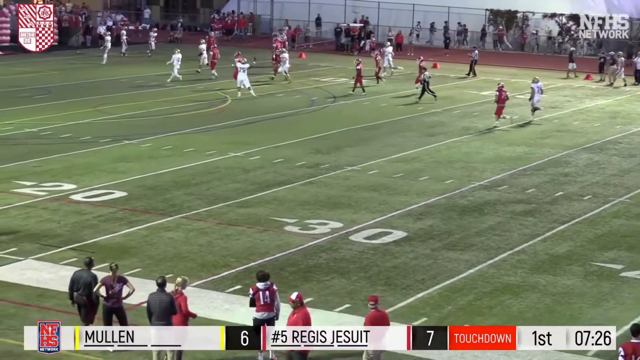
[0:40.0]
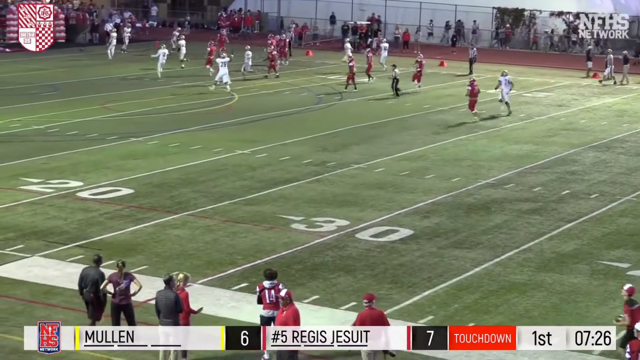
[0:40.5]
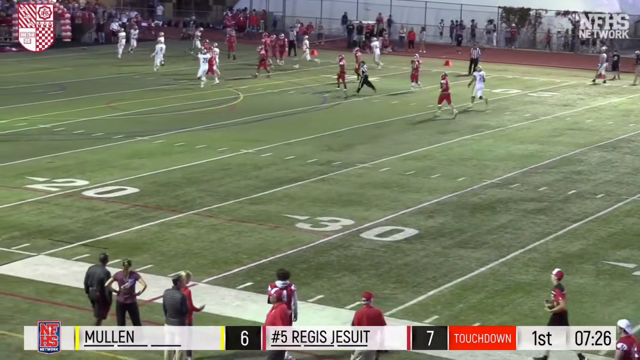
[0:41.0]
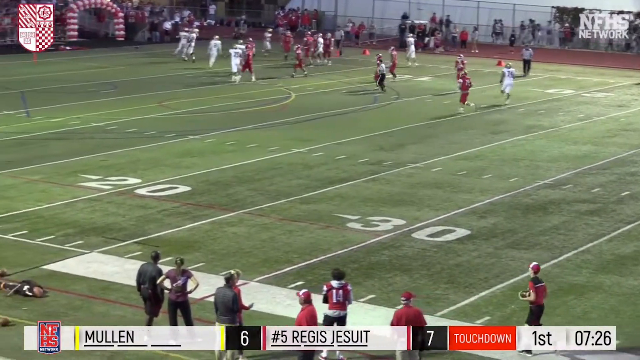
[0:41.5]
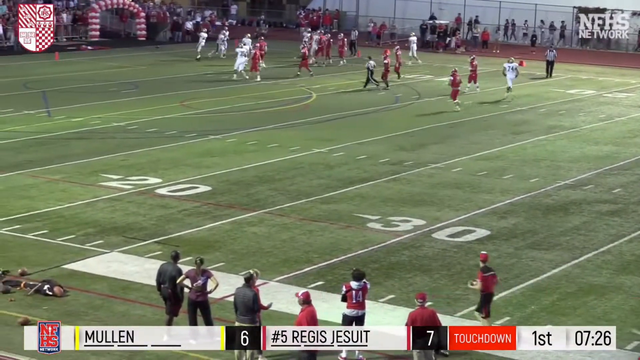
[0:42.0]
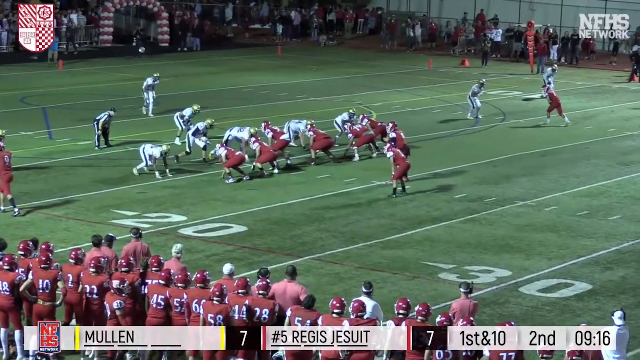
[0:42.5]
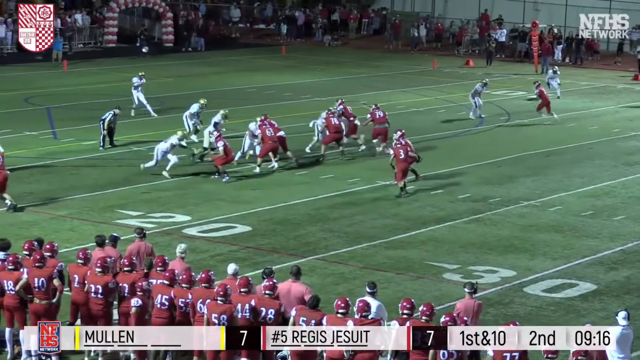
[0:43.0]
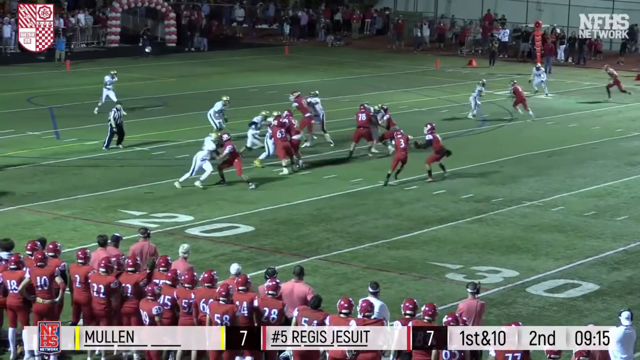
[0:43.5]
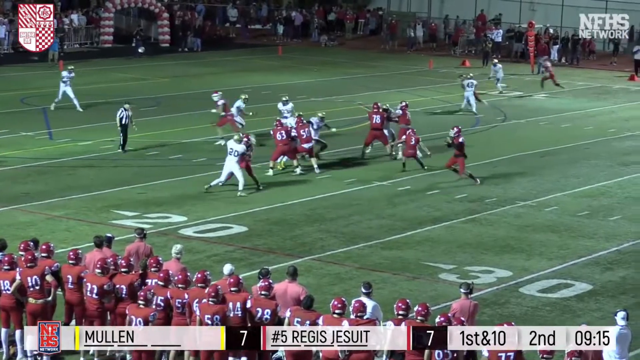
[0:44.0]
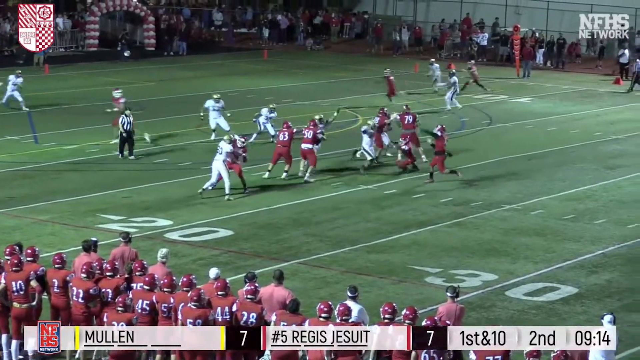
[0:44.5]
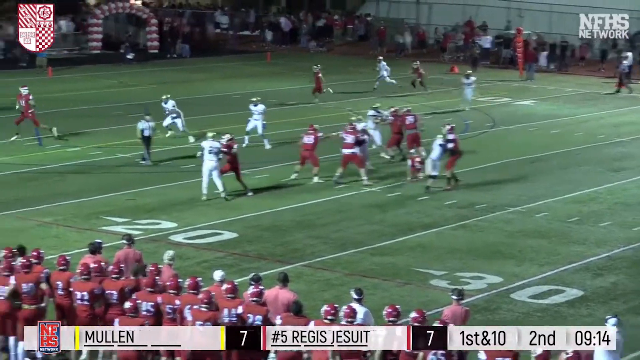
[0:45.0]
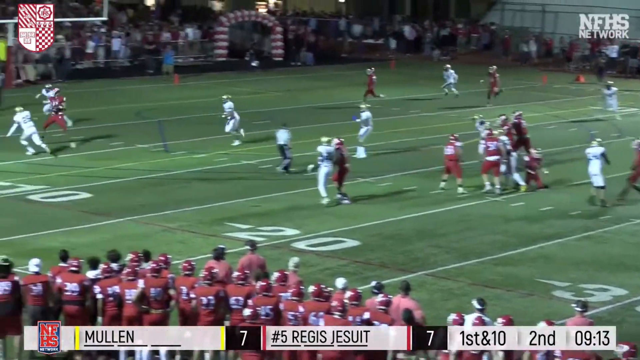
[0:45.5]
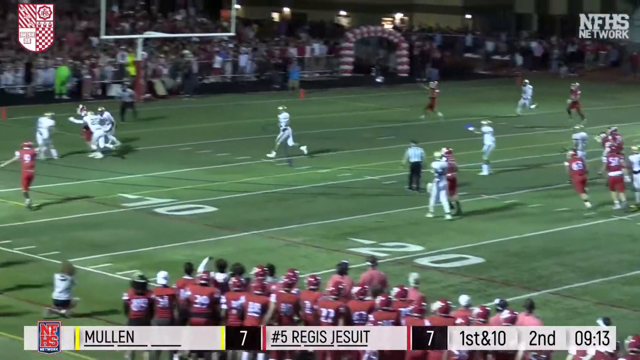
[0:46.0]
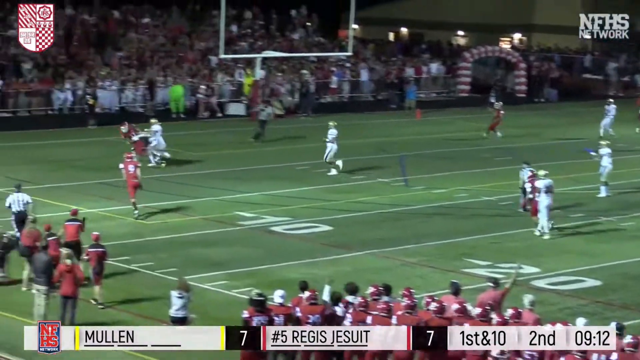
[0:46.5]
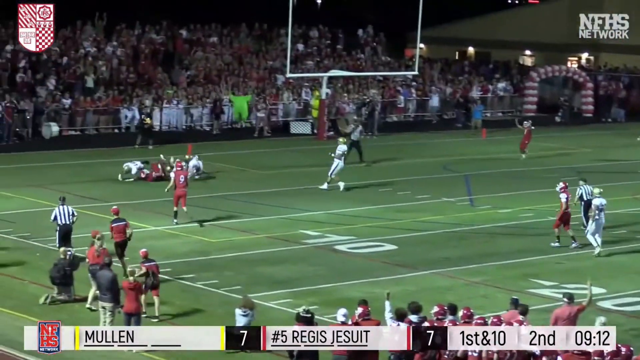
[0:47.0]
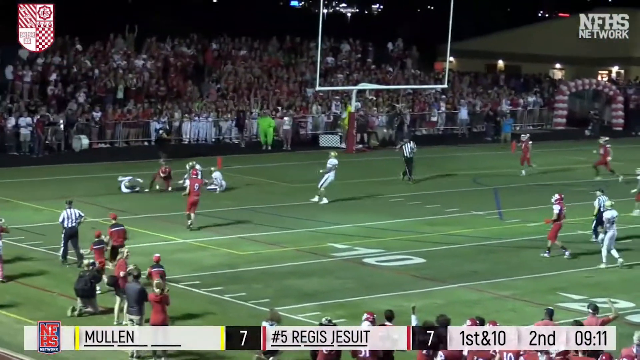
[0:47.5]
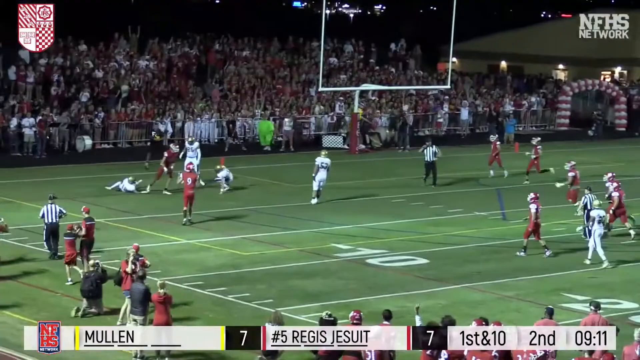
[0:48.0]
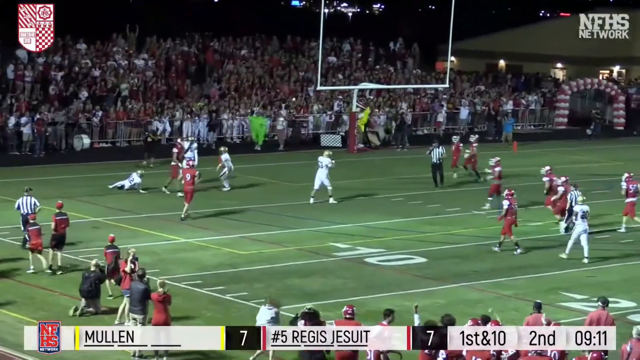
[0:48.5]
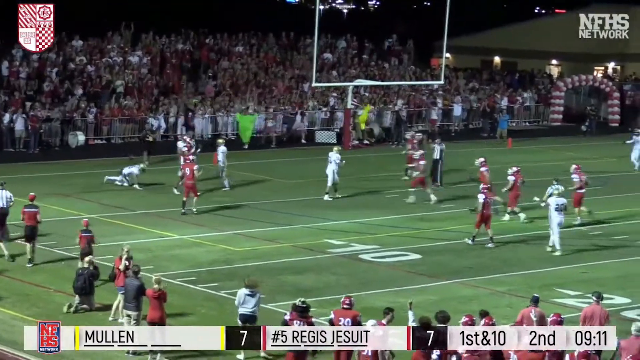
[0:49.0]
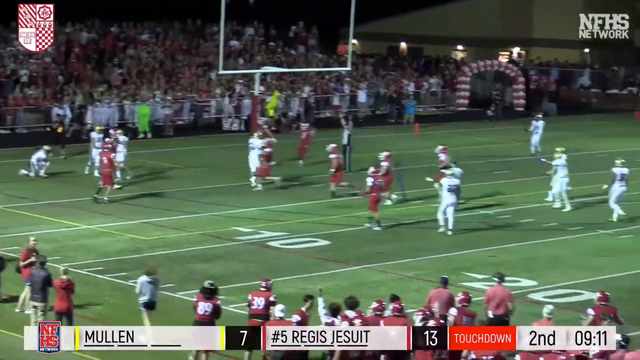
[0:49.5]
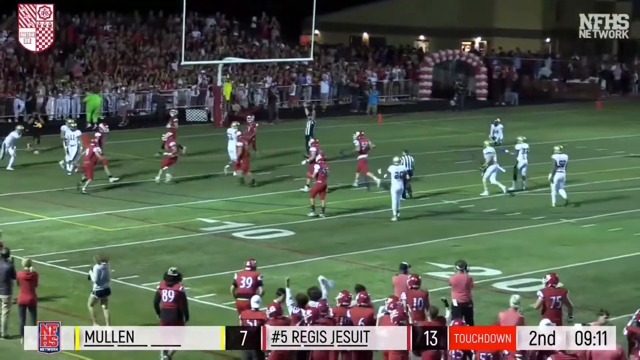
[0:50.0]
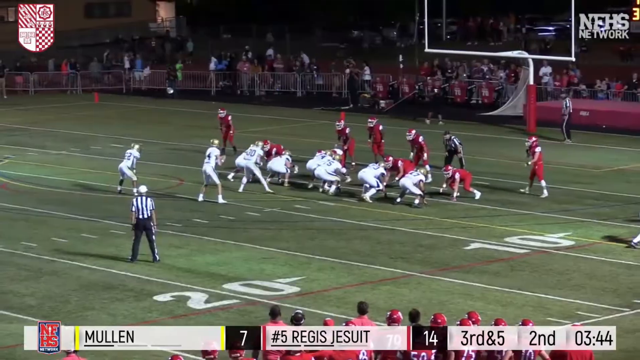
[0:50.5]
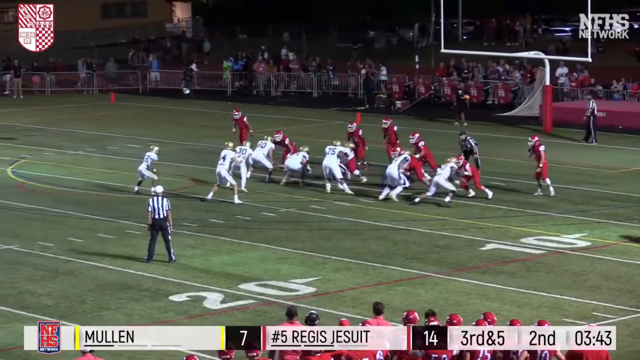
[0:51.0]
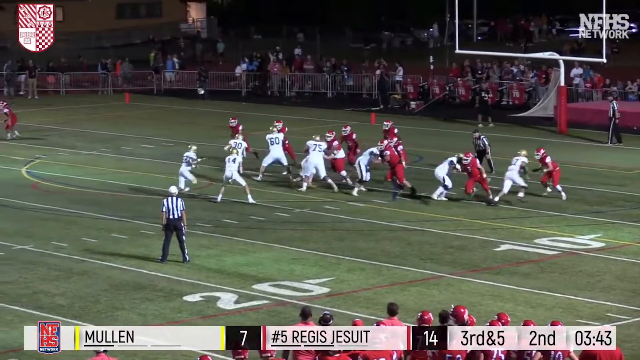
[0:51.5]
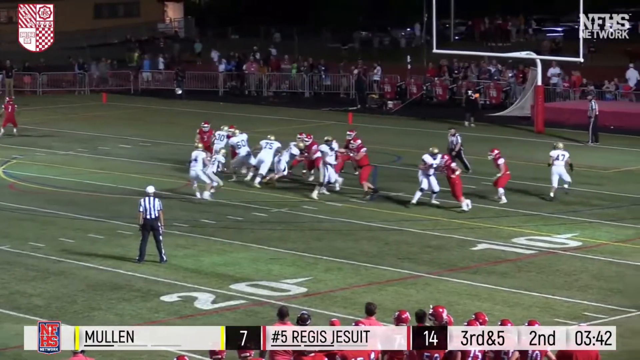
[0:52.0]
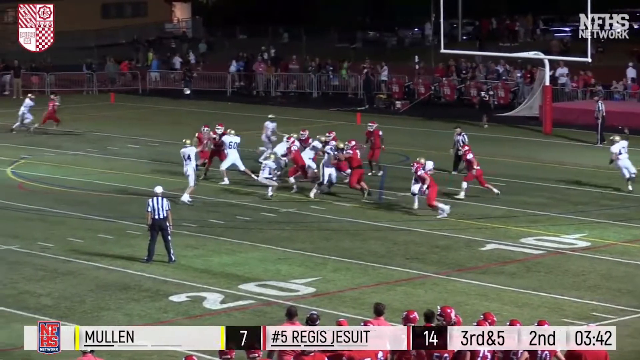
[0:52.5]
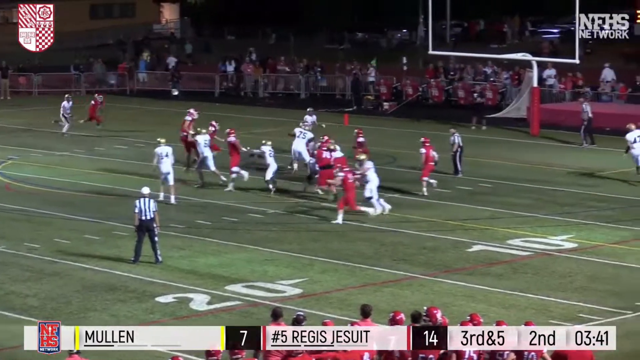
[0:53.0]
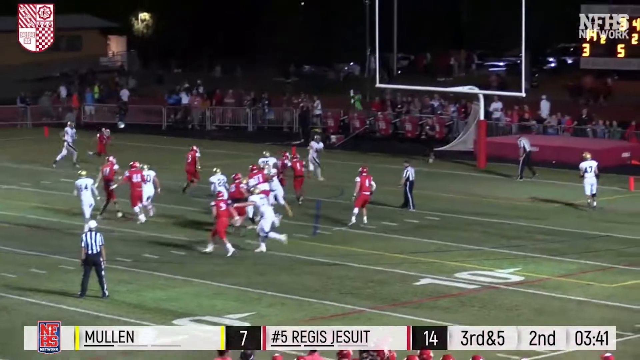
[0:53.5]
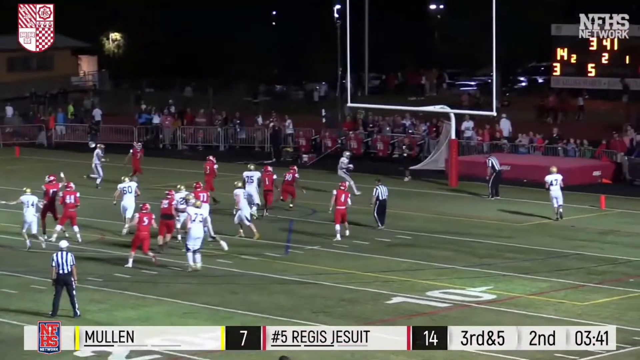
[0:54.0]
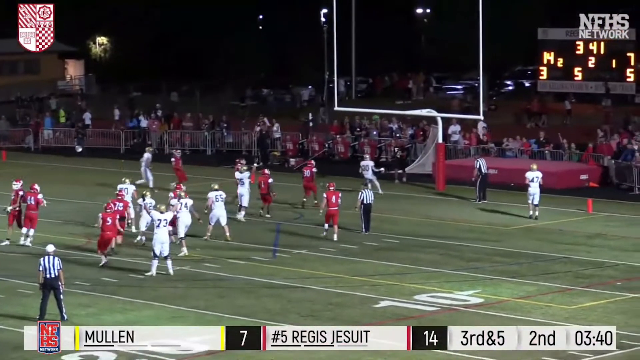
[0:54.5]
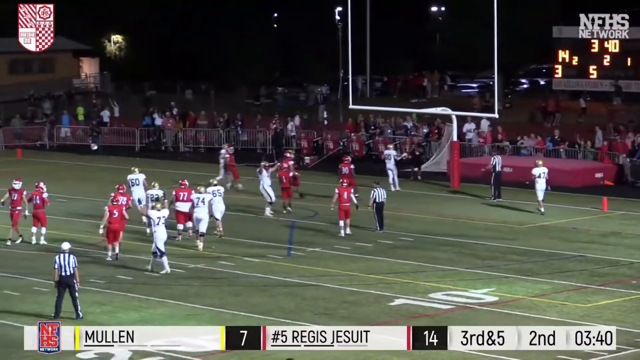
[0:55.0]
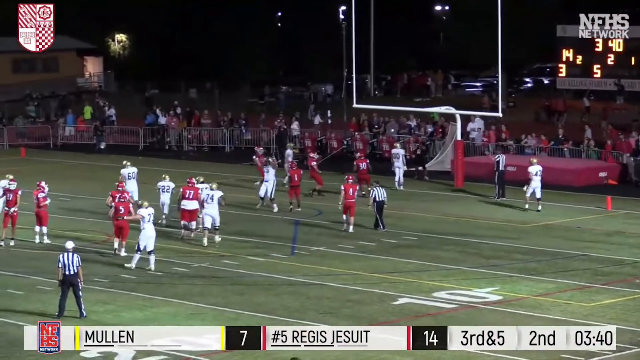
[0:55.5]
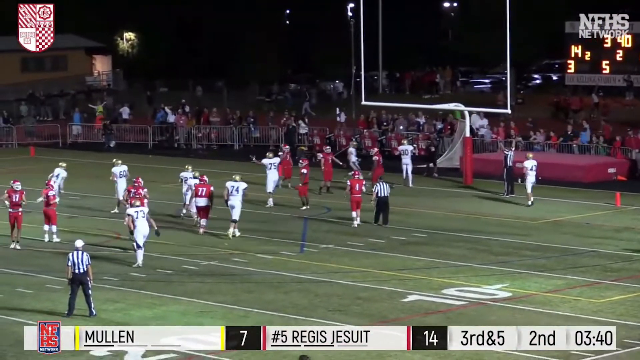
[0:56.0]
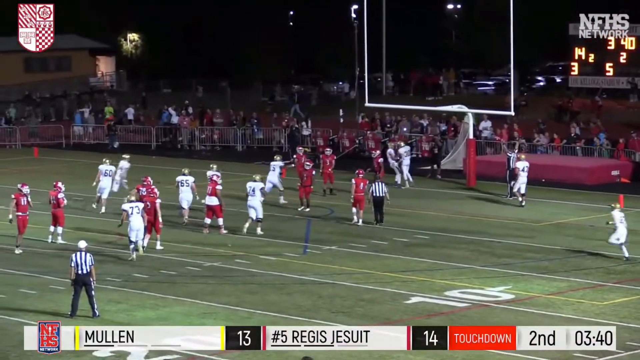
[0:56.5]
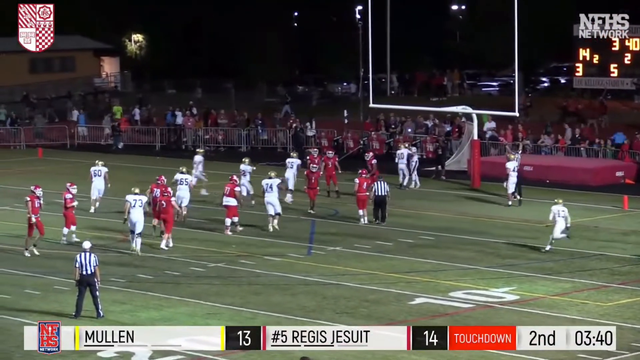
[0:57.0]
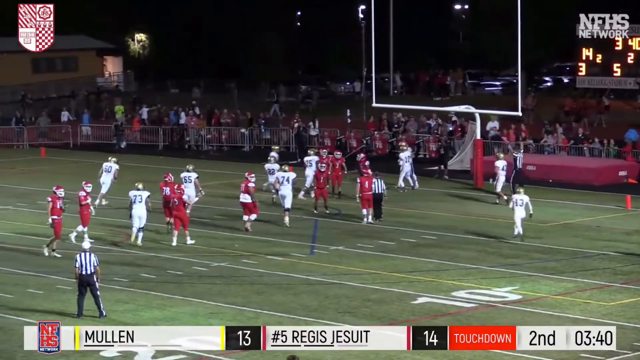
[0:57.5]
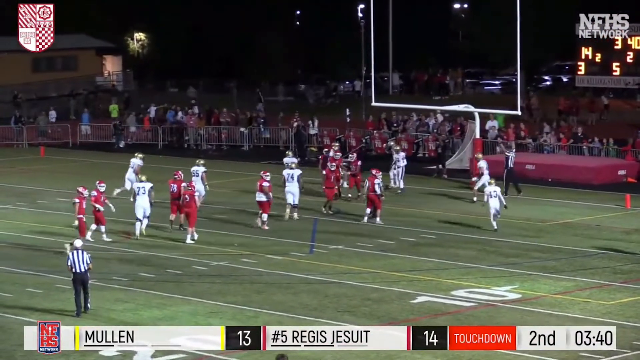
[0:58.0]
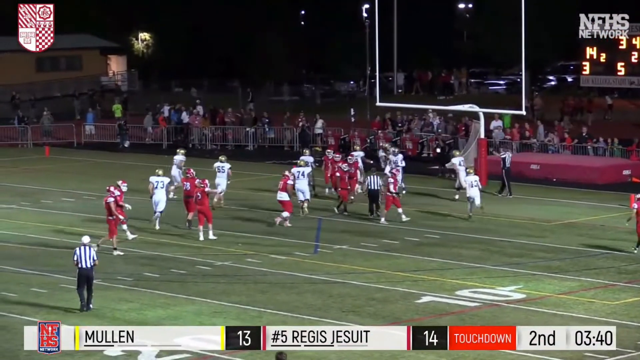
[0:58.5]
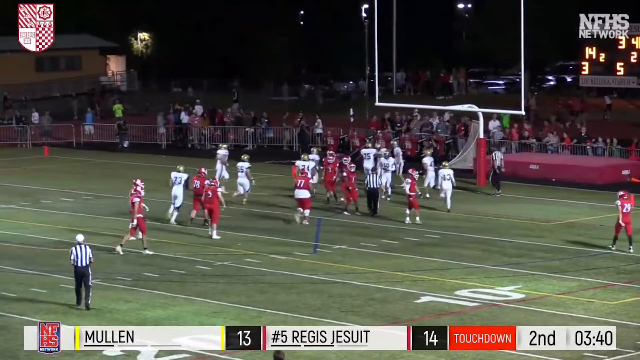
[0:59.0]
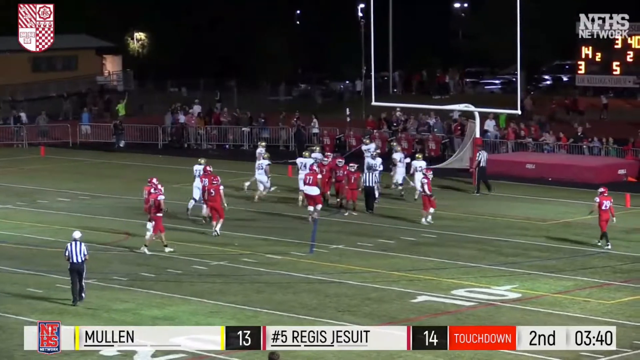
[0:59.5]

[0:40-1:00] The aftermath of the play continues. New footage follows with the score tied at seven. The red team's offense is at the 15-yard line, close to scoring. The camera shows the backside of the offense and the red team's sideline below, where the players not on the field are lined up side by side with the numbers on the backs of their jerseys visible. The quarterback takes the ball and fakes the handoff to the running back, who stays to block a pass rusher and falls to the ground. The quarterback then throws to a receiver split between two white-shirted defenders, who scores a touchdown after being tackled in the end zone, and red-jersey players enter the end zone. Gameplay from the white team follows as they do the same thing: they fake to the running back and throw a lob to a receiver in the end zone, who drops the ball in the end zone, and teammates celebrate with them afterward.